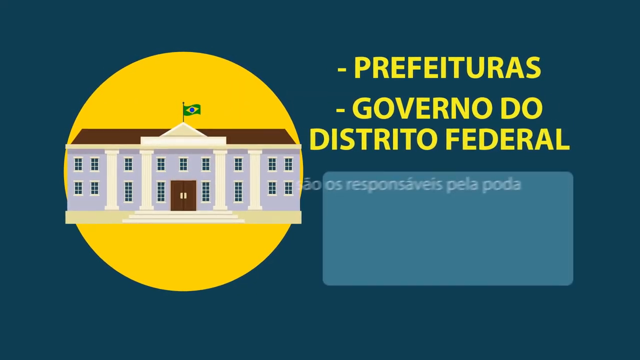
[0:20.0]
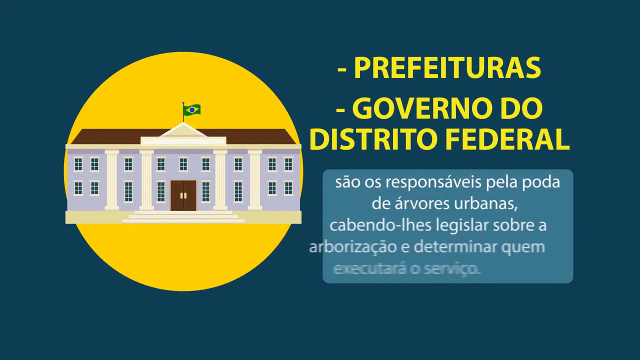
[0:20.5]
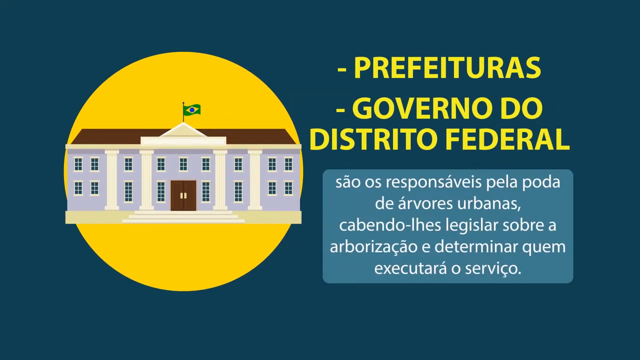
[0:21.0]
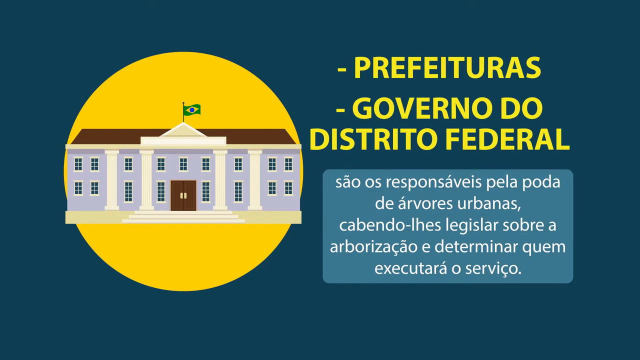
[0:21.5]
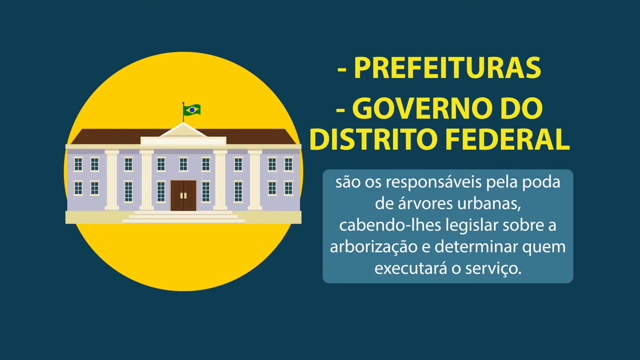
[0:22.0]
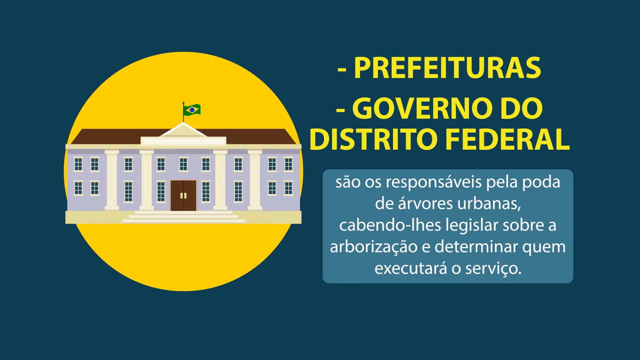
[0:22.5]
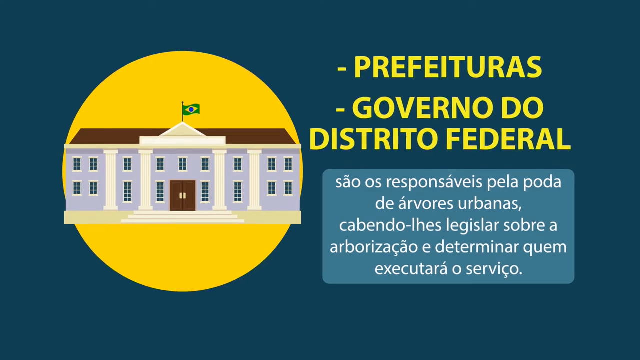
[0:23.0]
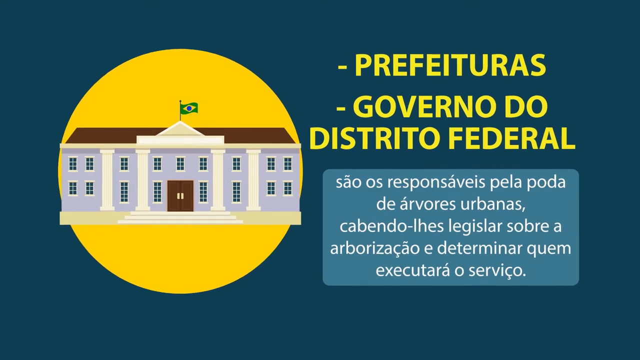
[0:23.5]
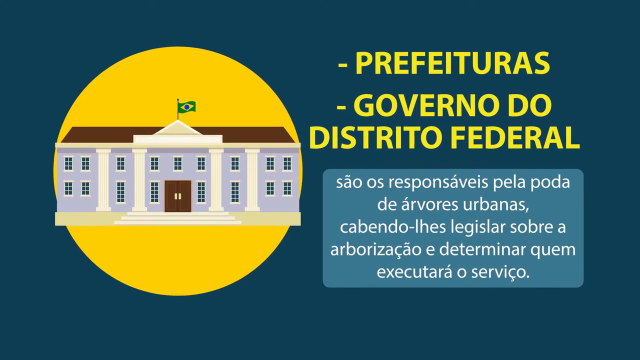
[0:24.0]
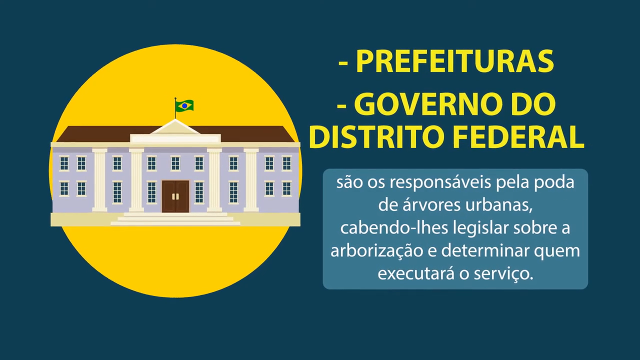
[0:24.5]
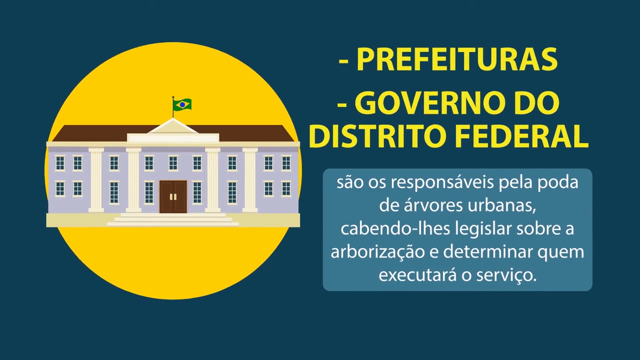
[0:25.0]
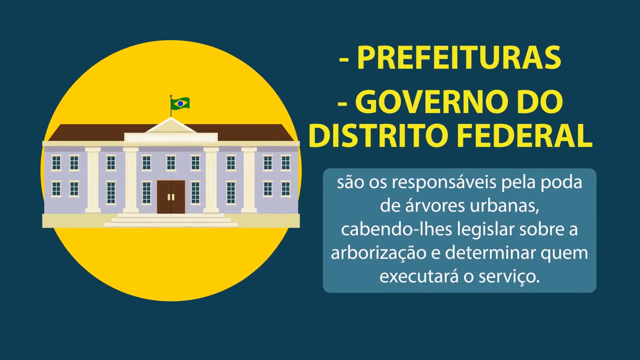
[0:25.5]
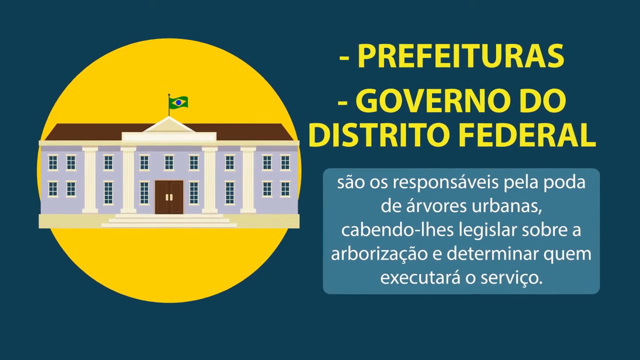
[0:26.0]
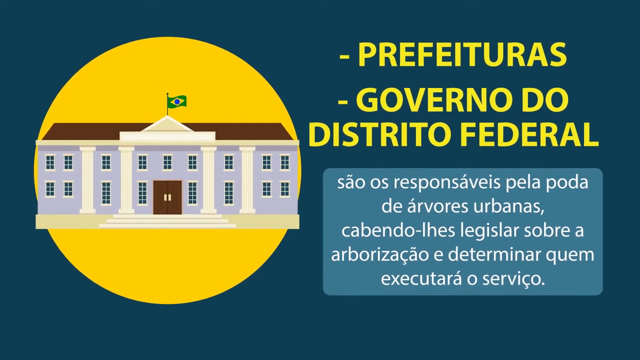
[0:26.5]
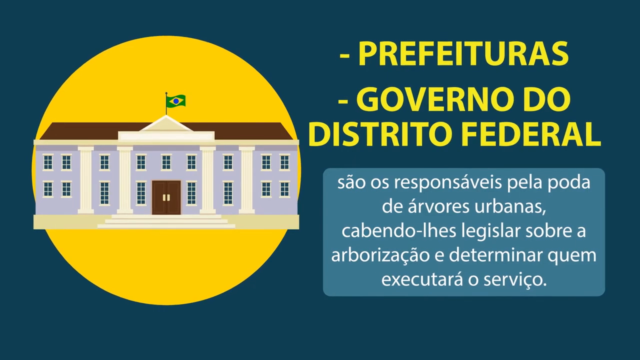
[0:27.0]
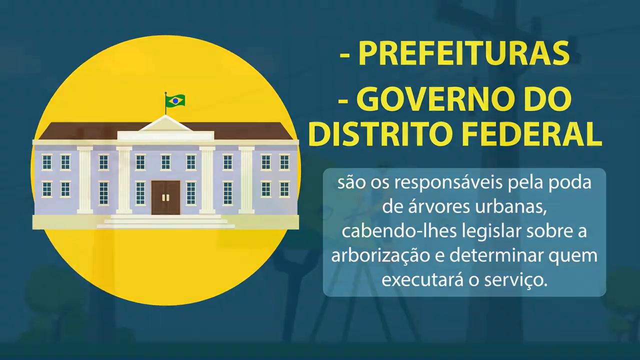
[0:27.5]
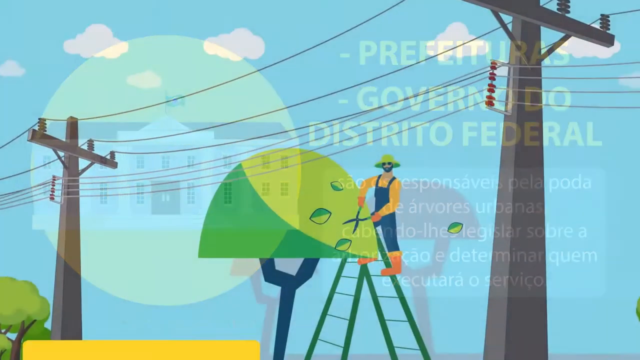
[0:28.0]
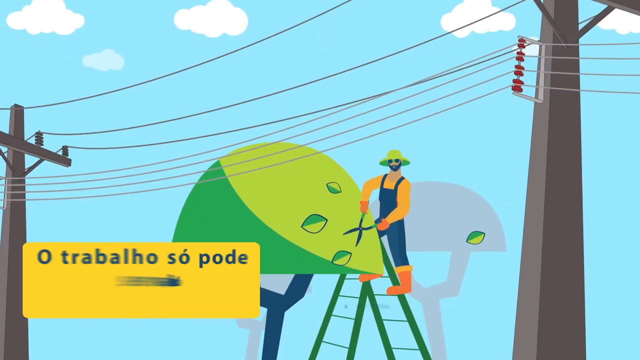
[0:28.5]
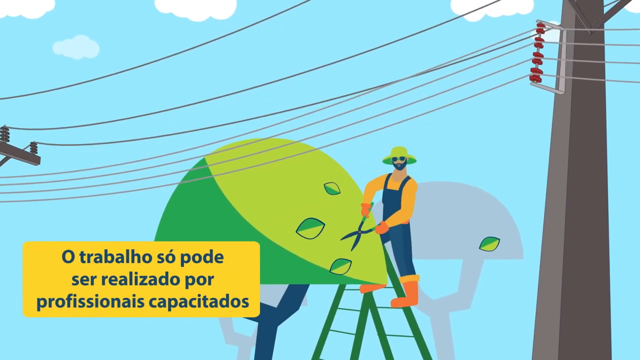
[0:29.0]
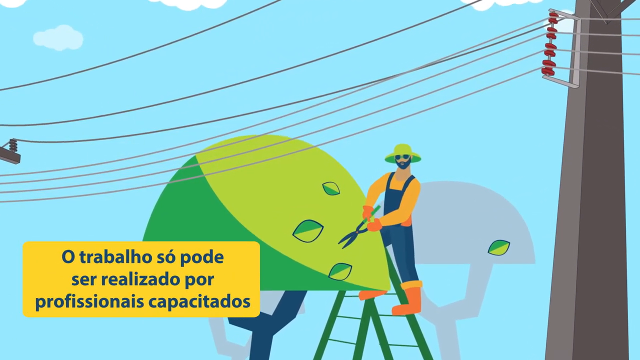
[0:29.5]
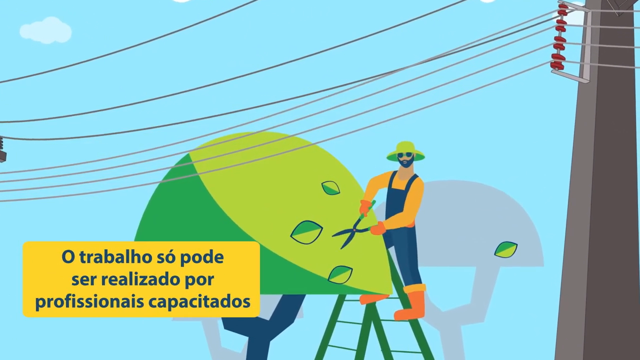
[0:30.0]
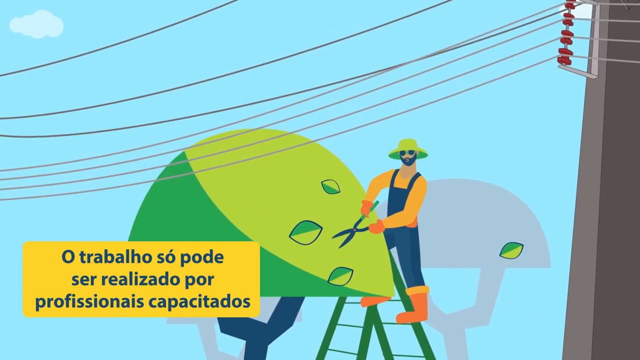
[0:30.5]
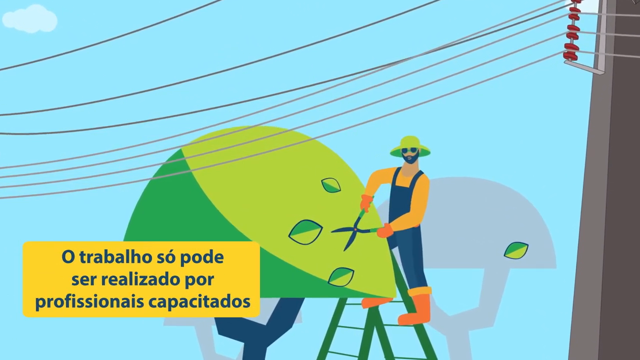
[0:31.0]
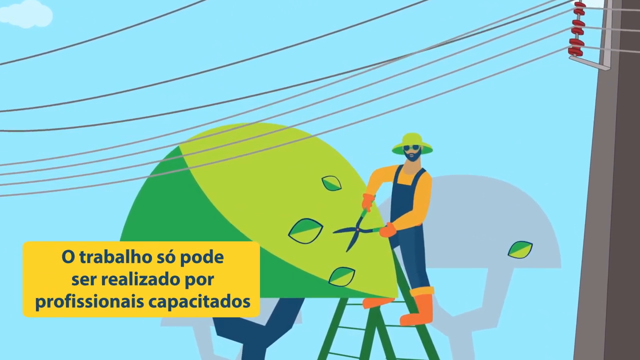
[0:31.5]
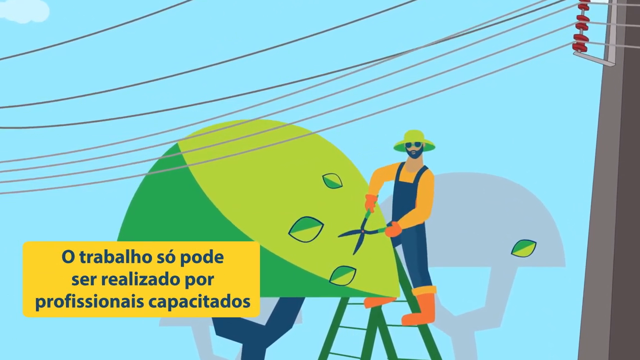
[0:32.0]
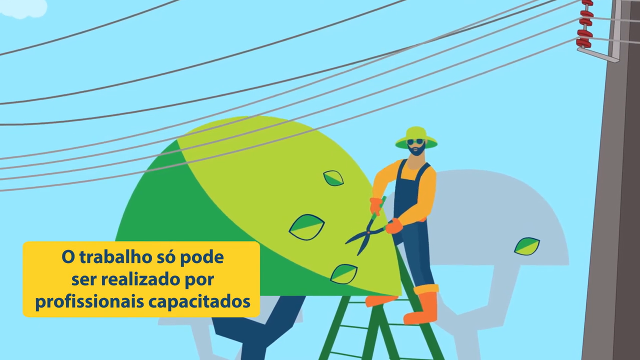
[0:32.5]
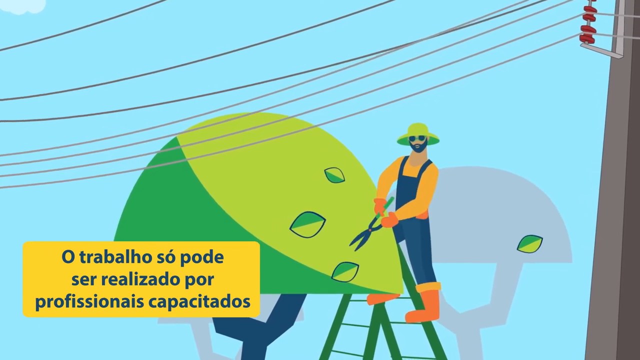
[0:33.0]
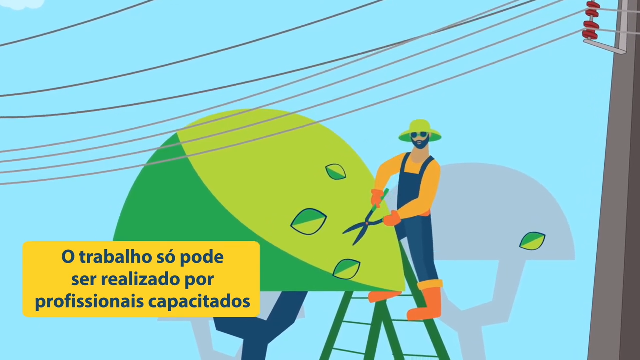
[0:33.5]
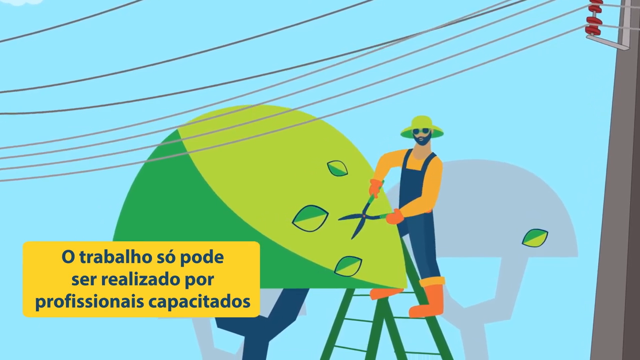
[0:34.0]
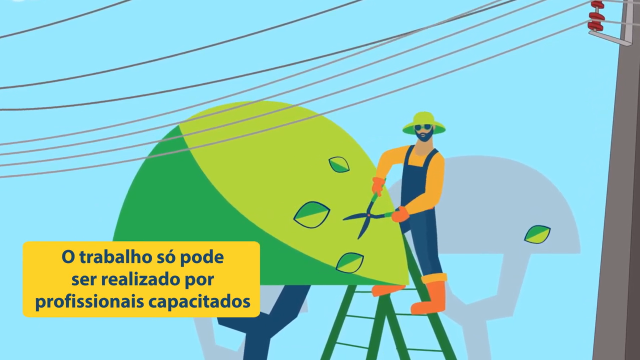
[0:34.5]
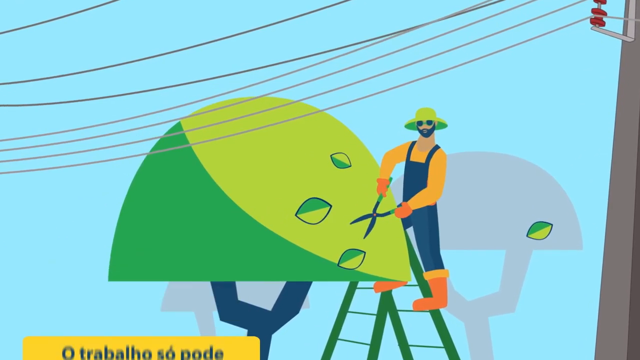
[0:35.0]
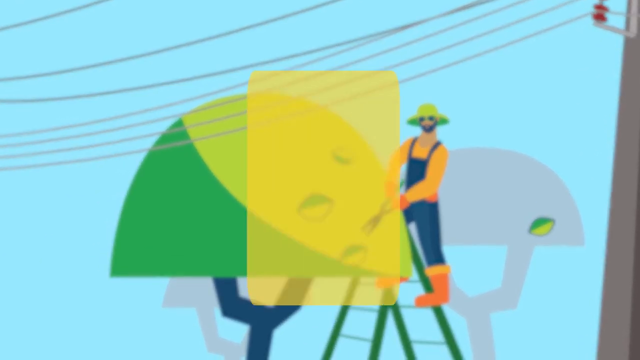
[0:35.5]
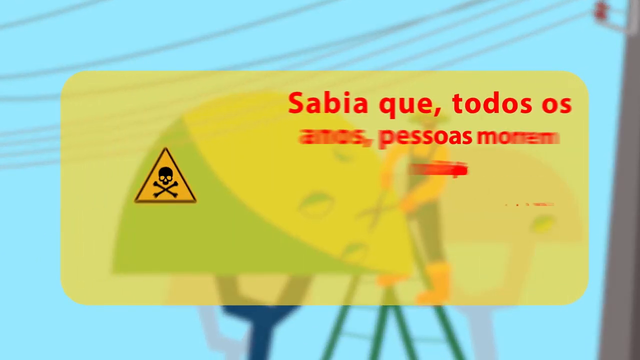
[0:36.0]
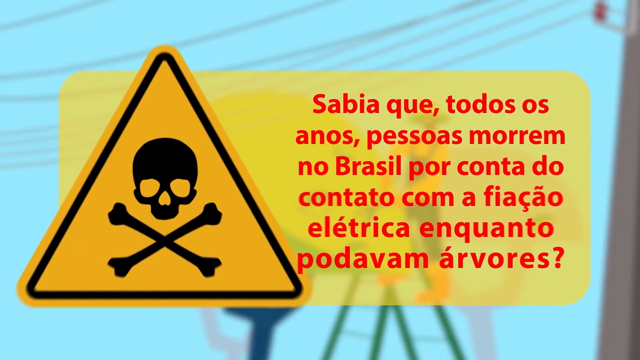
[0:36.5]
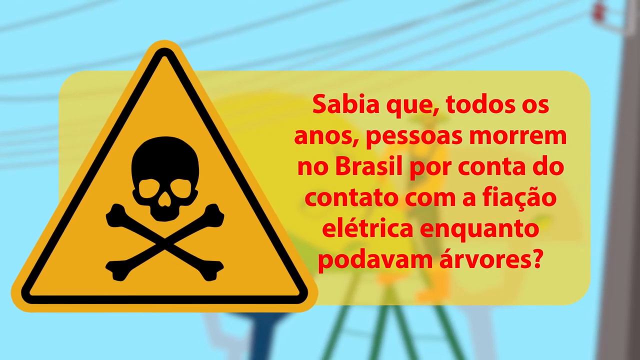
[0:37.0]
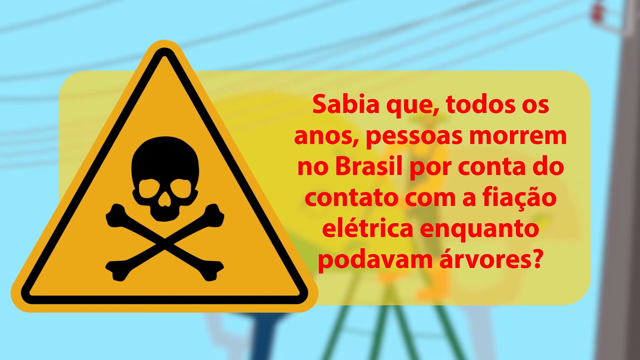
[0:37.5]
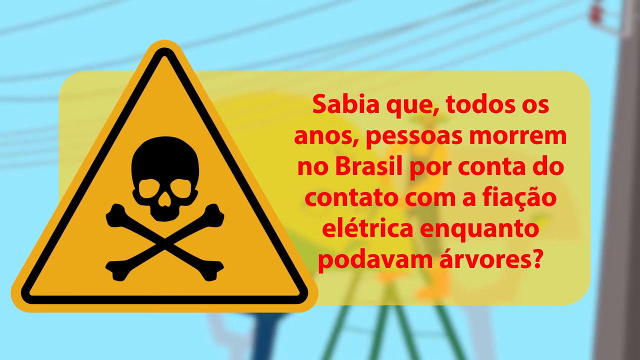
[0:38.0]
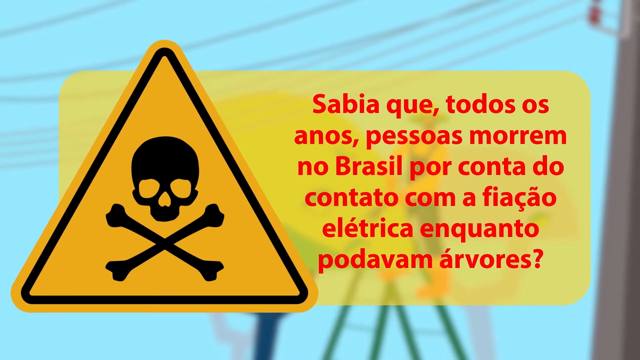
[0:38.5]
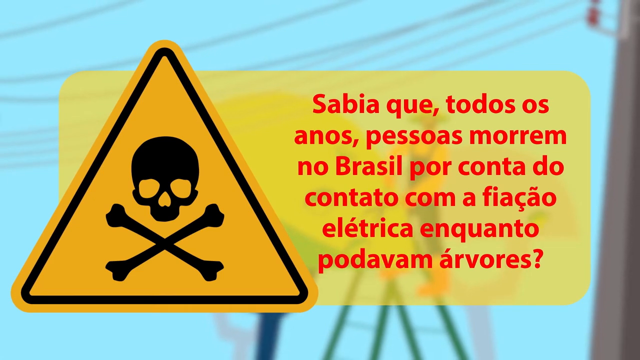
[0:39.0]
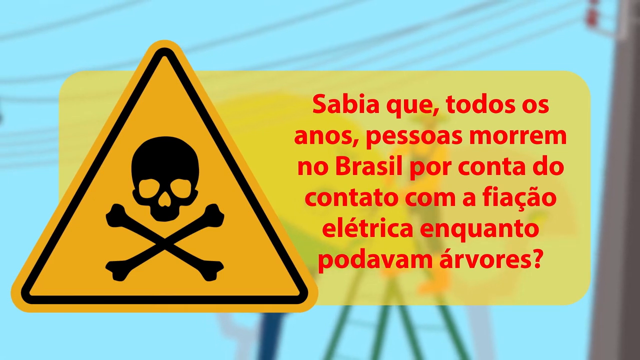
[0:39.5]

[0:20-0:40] The text "Governo" appears, so the building seems to represent the government. The video returns to the man with the trimmers, who continues the same motion. In the lower left corner is a yellow box with dark blue text. He wears sunglasses and has a beard. The video slowly zooms in on him. Another yellow text box appears over the image, with a yellow triangle bearing a skull and crossbones symbol on its left side; the danger symbol kind of pops out from the text. Some red text seems to show the dangers of someone doing this kind of work very close to power lines.